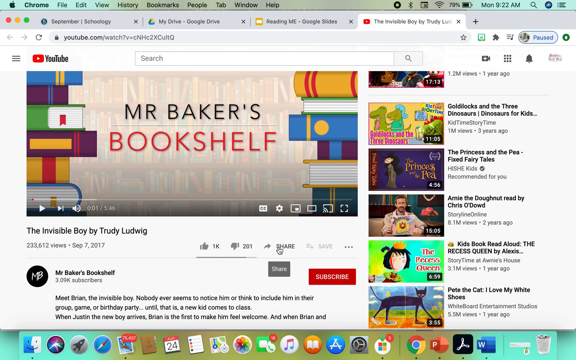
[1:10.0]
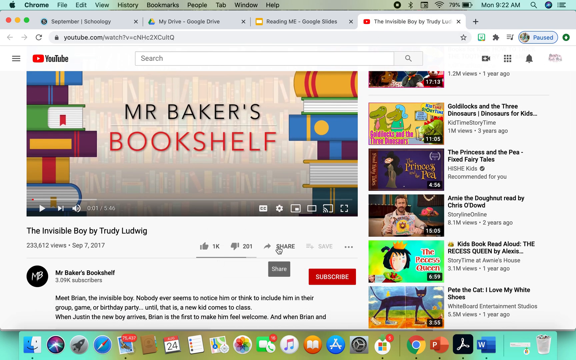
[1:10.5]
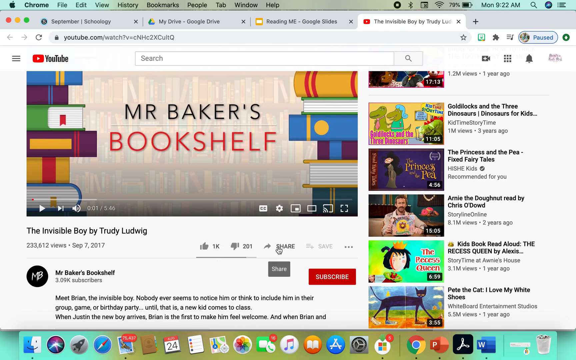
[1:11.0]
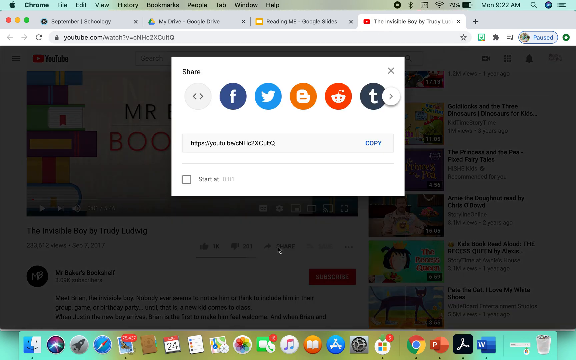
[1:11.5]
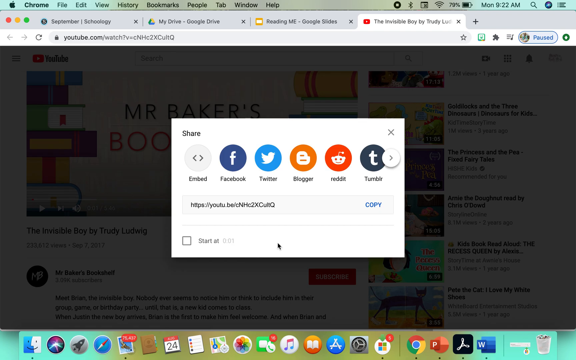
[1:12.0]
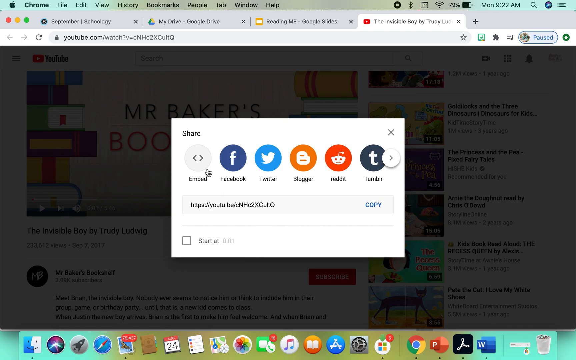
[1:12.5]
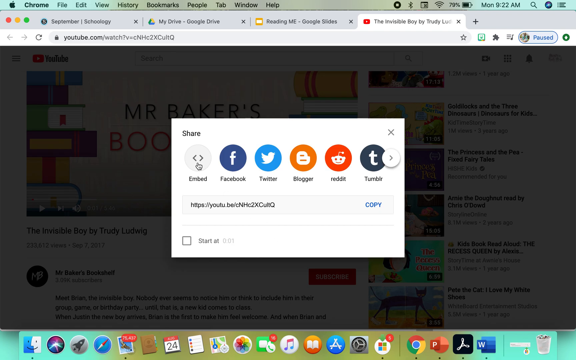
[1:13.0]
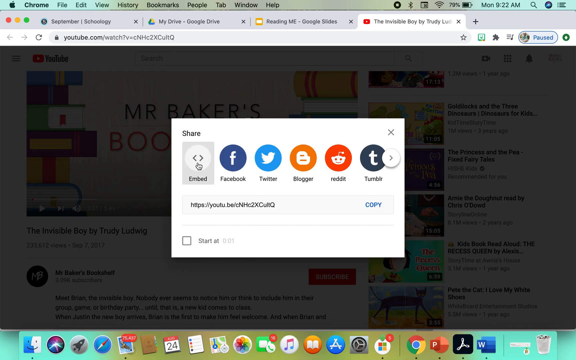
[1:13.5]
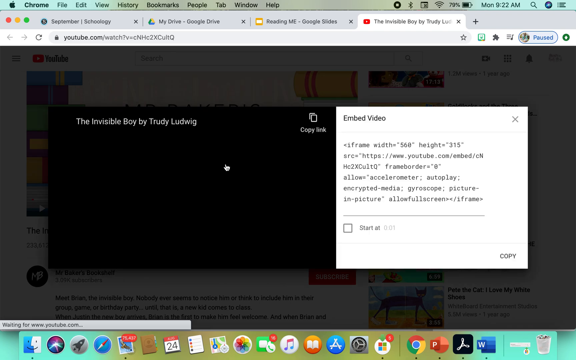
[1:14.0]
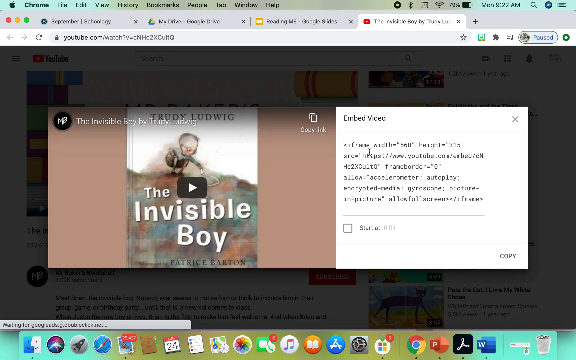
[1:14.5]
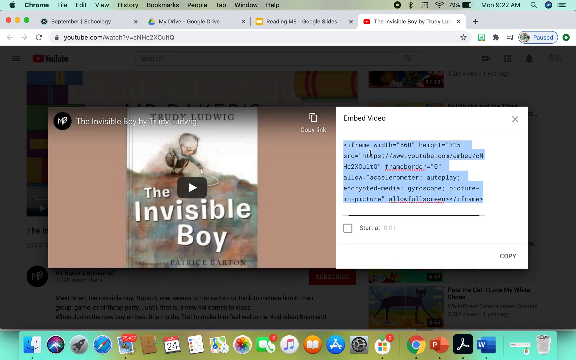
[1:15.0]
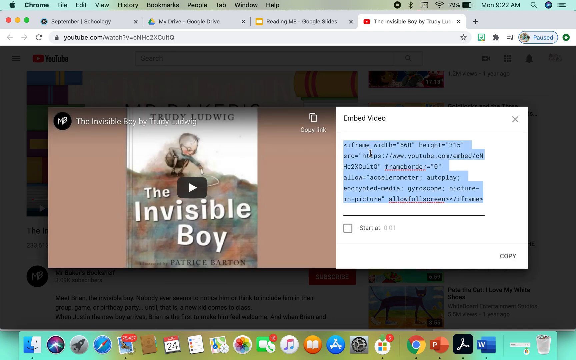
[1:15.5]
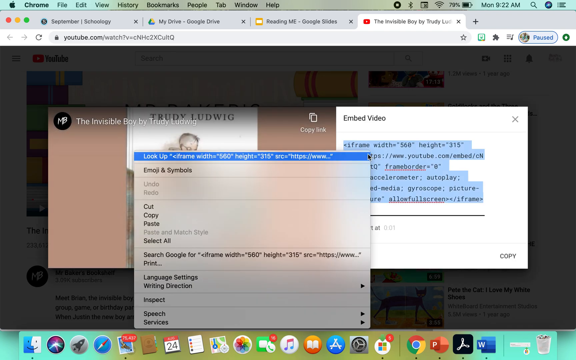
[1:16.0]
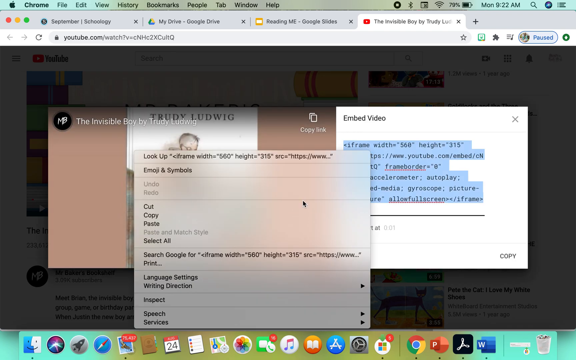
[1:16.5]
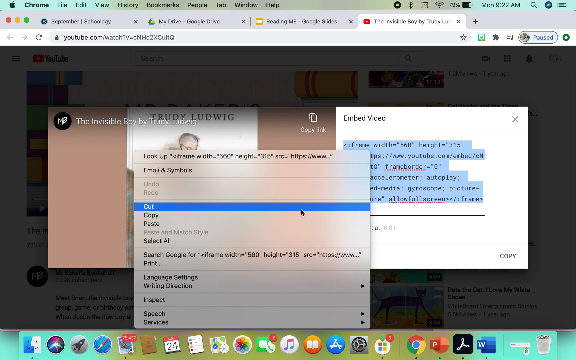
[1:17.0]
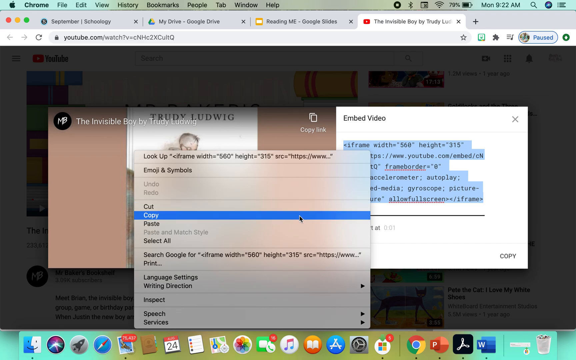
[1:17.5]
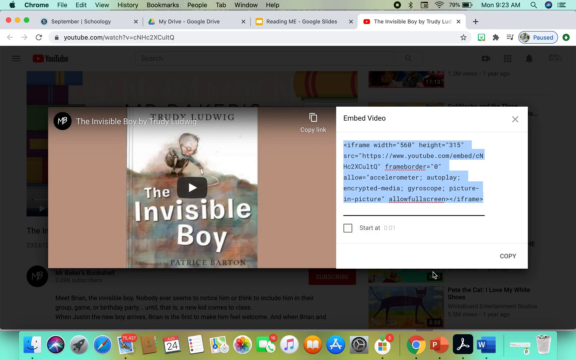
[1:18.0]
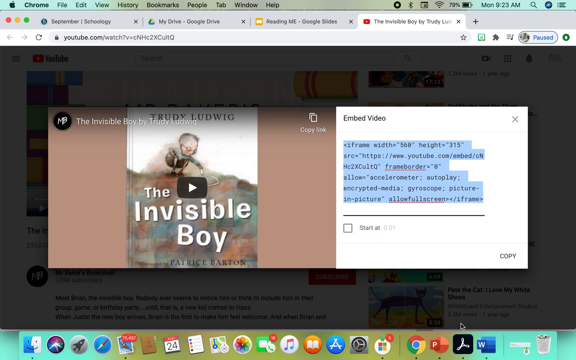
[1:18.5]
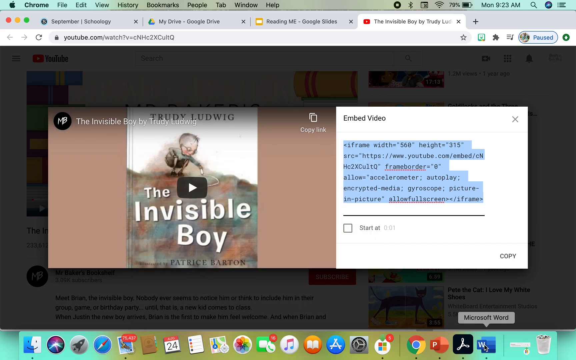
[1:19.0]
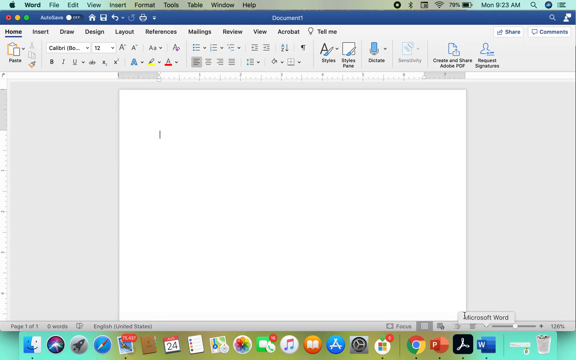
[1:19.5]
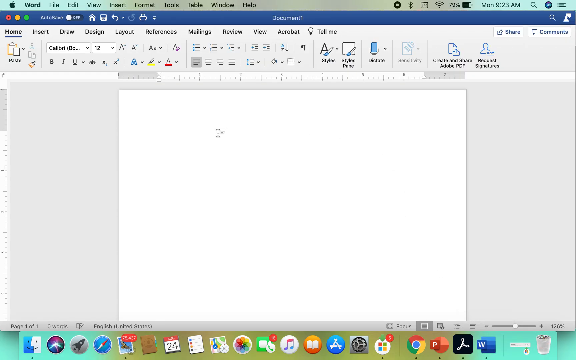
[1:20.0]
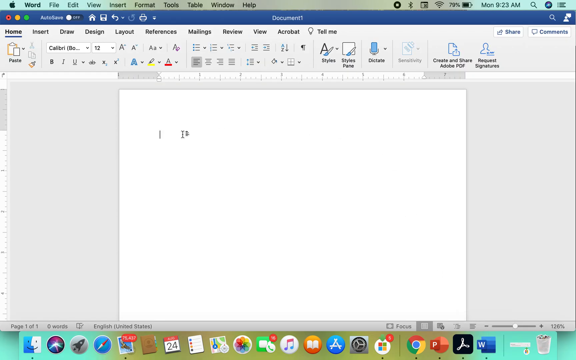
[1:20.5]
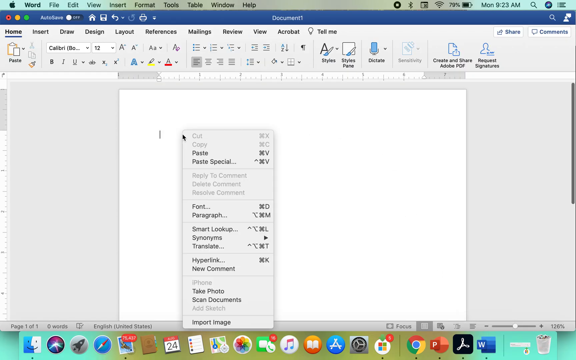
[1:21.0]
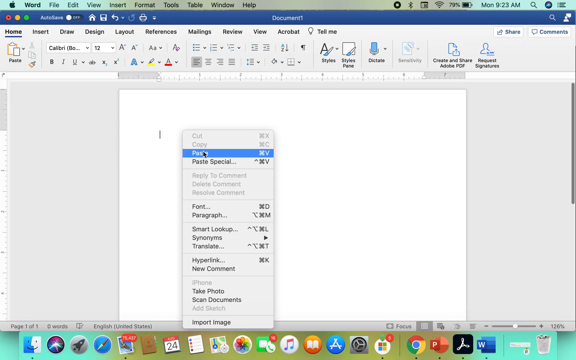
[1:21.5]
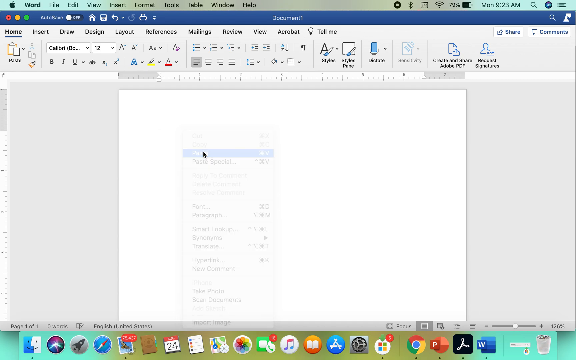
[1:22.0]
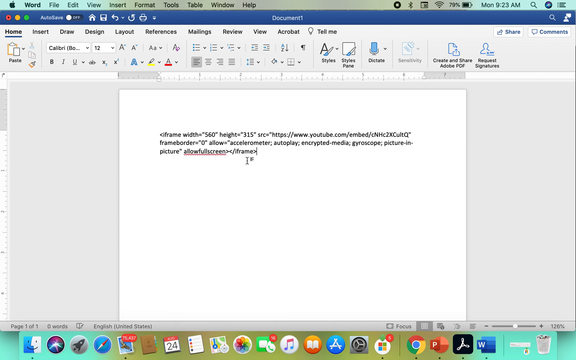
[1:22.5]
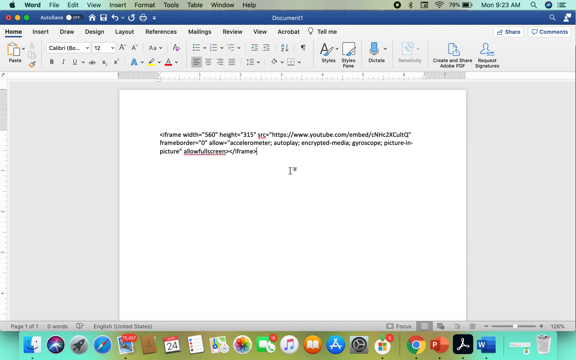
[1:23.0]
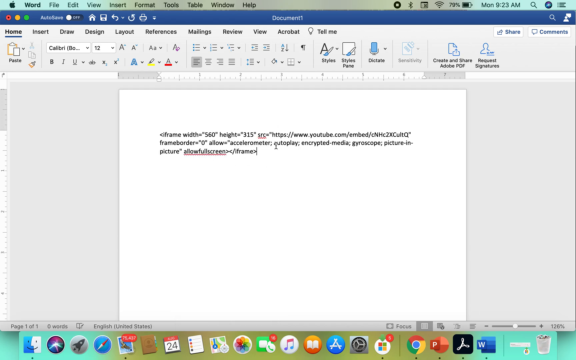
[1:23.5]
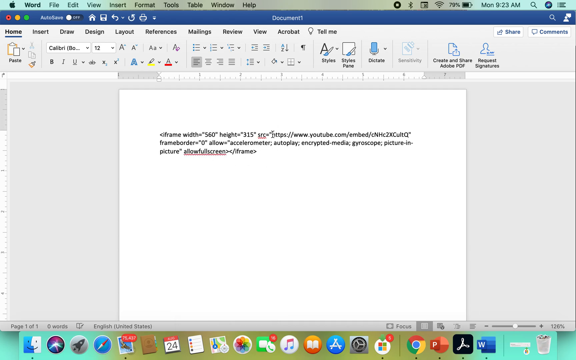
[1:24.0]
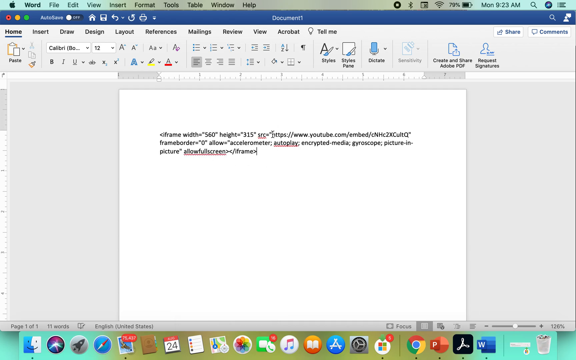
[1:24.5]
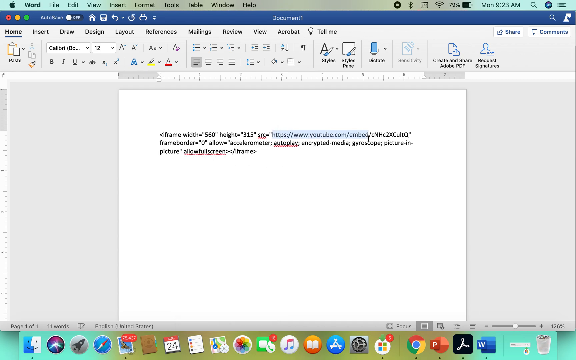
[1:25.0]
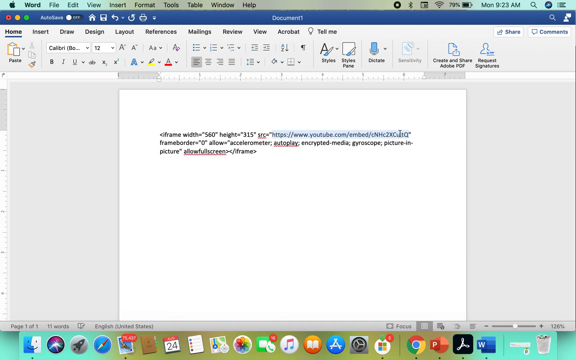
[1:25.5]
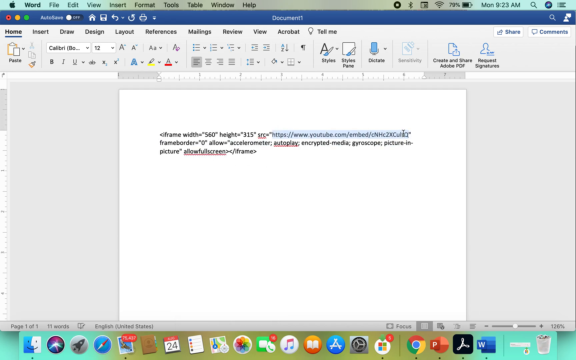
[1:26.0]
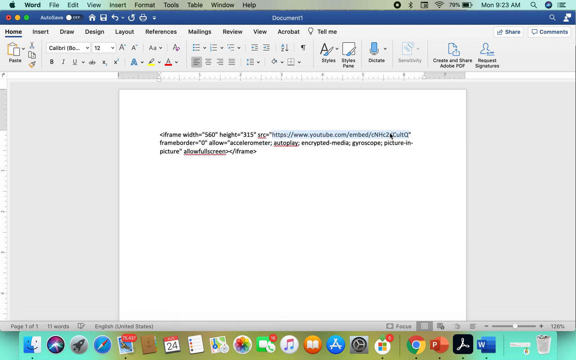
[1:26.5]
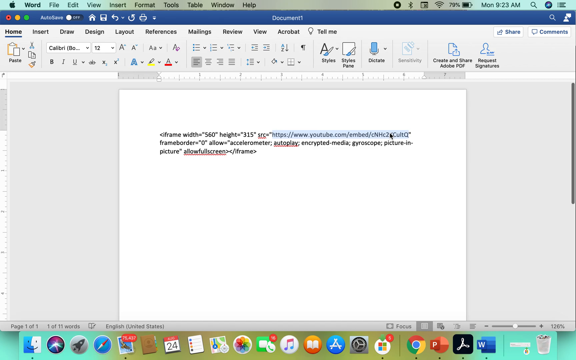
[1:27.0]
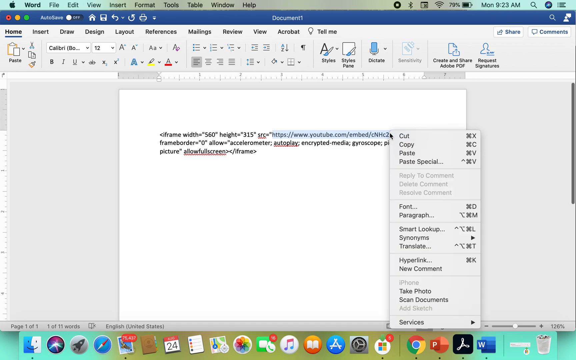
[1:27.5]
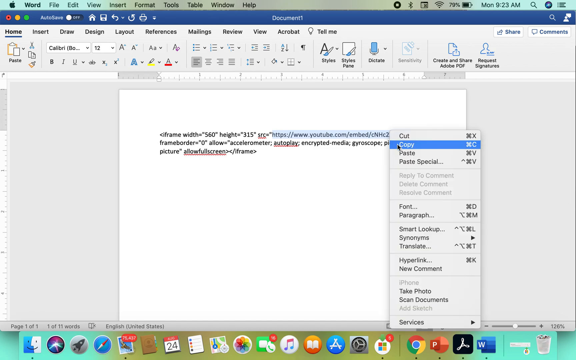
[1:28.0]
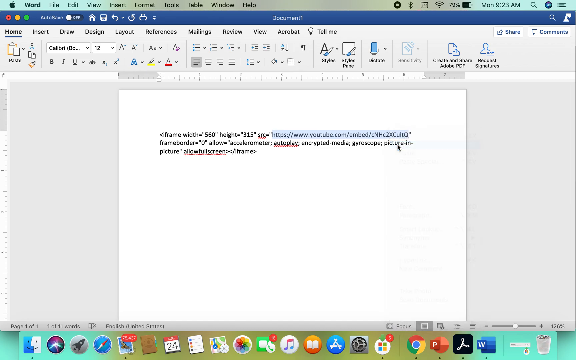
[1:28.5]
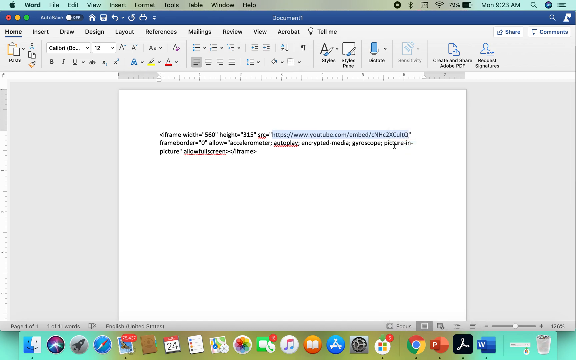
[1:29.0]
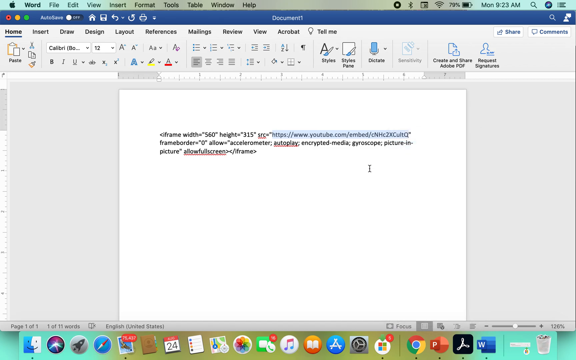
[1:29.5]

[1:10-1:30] After the Share button is clicked, the background turns semi-opaque black and a window overlay appears in the middle. It has an X to close the box and social media icons for Facebook, Twitter, Blogger, Reddit, and Tumblr, plus an embed option. Below the icons are a website address and a copy option, and there is a checkbox in the bottom left corner apparently reading "start at 001." The user clicks the embed button, which opens another pop-up window with the YouTube video, The Invisible Boy by Trudy Ludwig, on the left and the code to embed the video on the right. The user highlights the whole code, another window shows up, and they click copy. They go to Microsoft Word and paste into a document, then highlight the whole address that starts with "https youtube.com" and click copy.